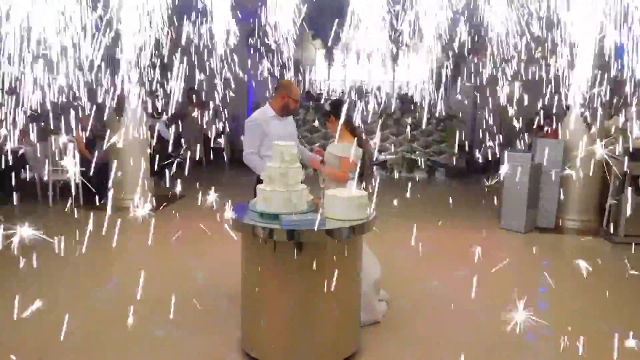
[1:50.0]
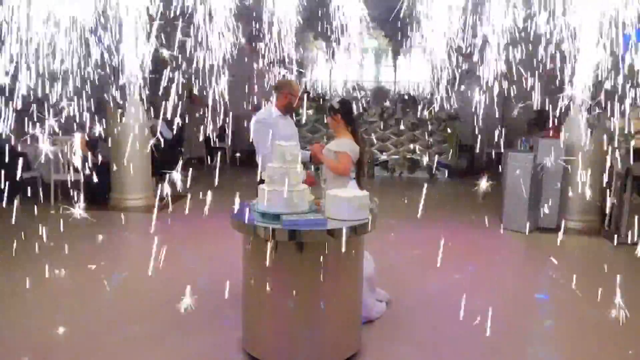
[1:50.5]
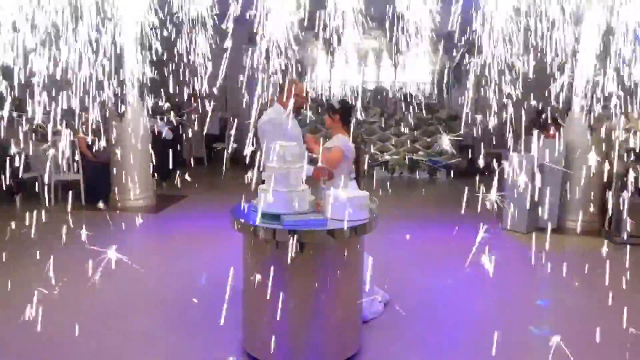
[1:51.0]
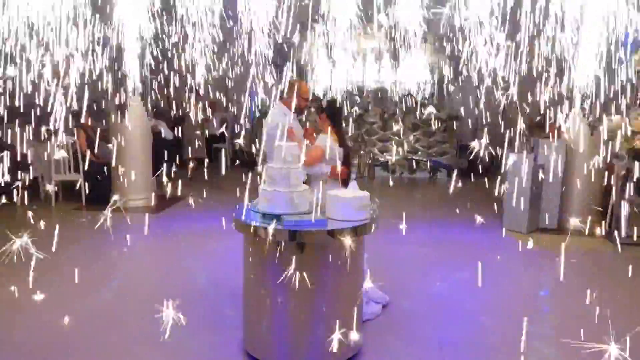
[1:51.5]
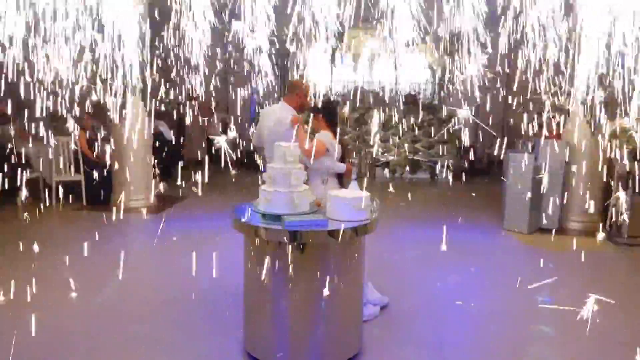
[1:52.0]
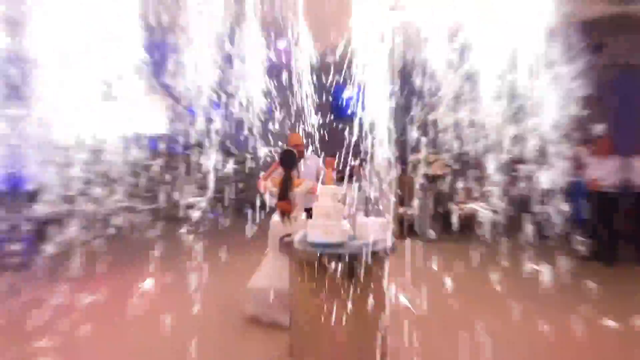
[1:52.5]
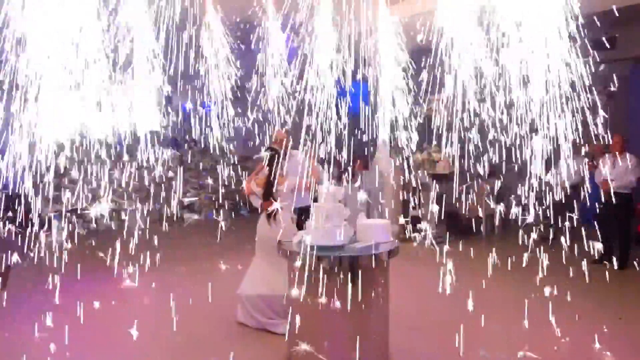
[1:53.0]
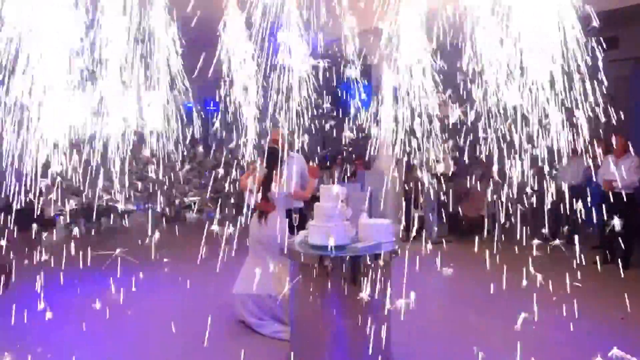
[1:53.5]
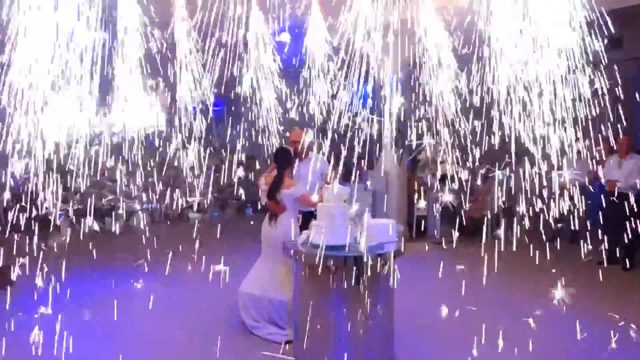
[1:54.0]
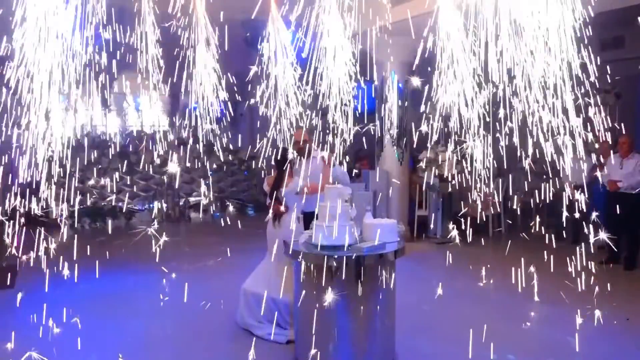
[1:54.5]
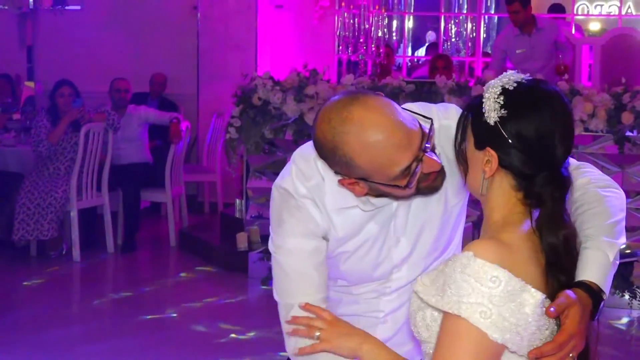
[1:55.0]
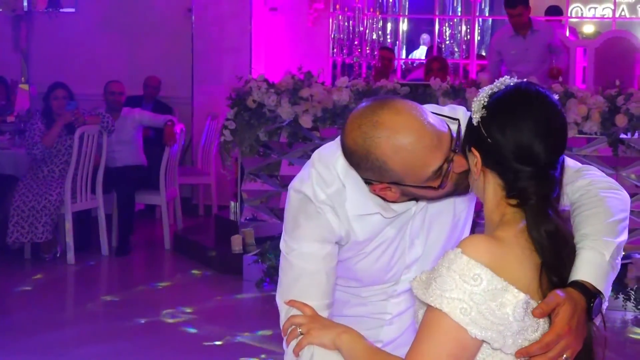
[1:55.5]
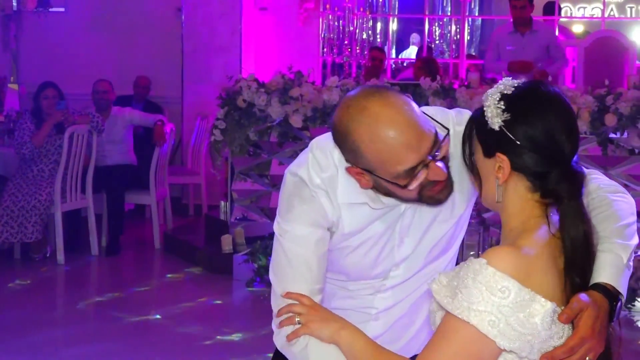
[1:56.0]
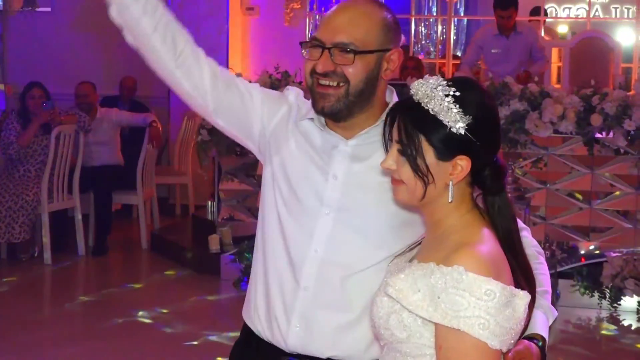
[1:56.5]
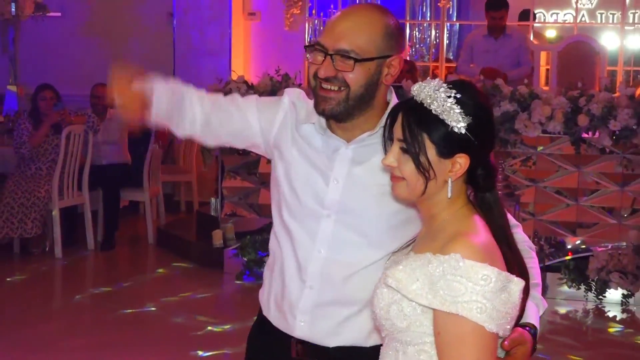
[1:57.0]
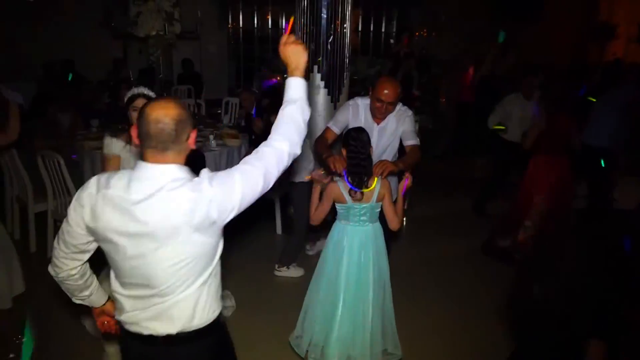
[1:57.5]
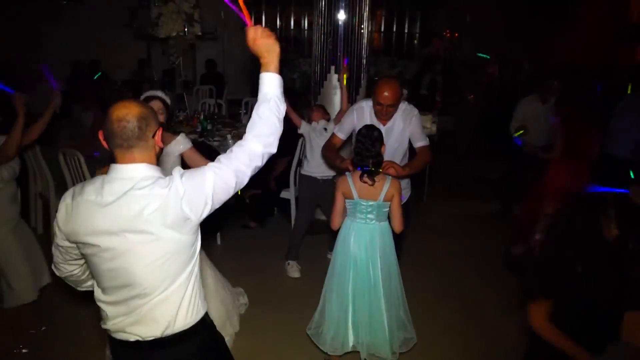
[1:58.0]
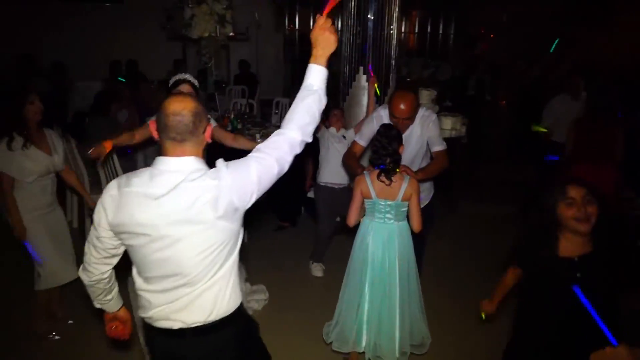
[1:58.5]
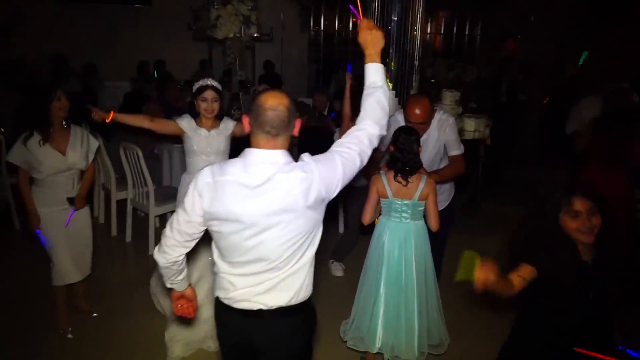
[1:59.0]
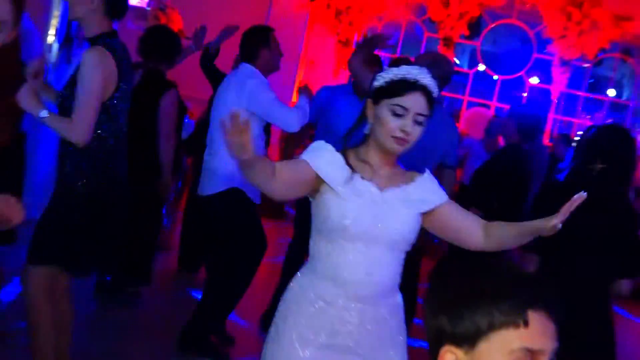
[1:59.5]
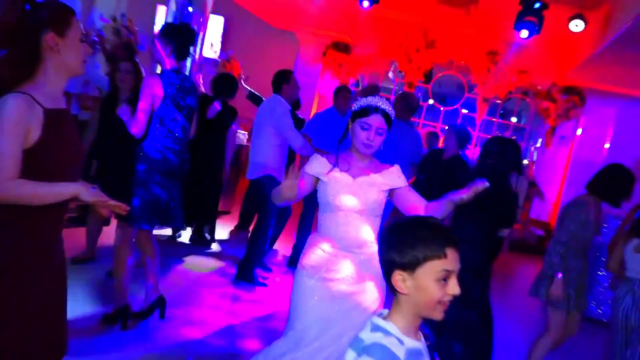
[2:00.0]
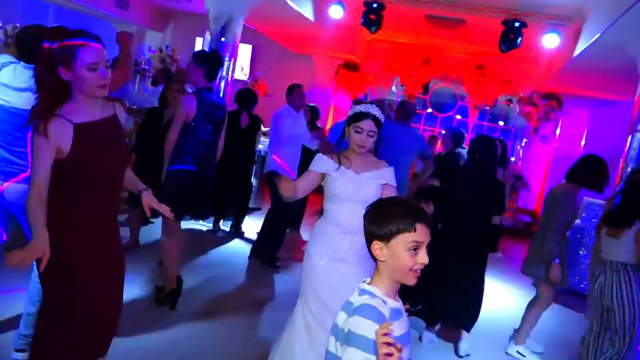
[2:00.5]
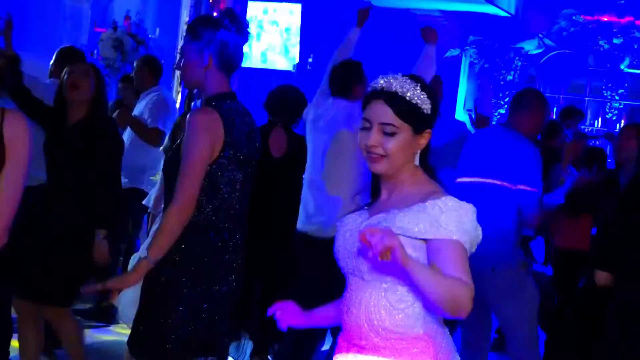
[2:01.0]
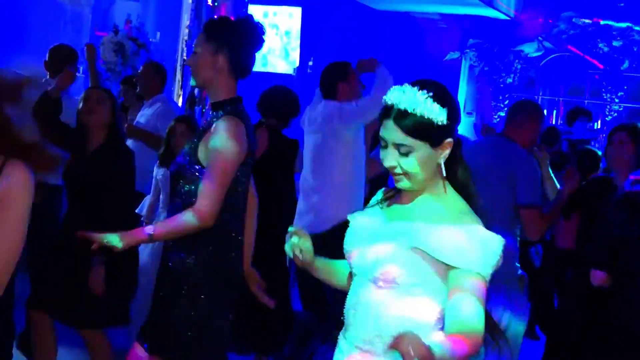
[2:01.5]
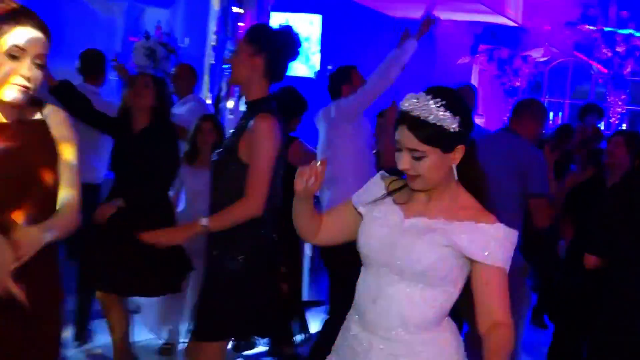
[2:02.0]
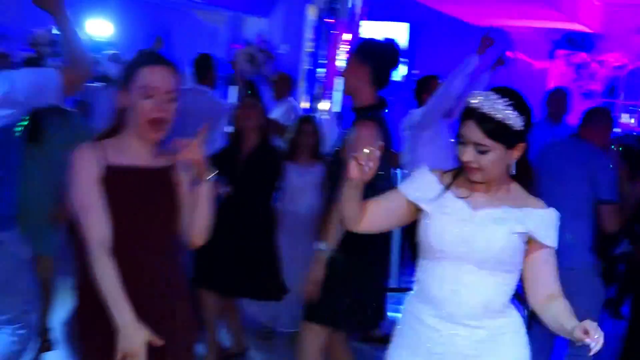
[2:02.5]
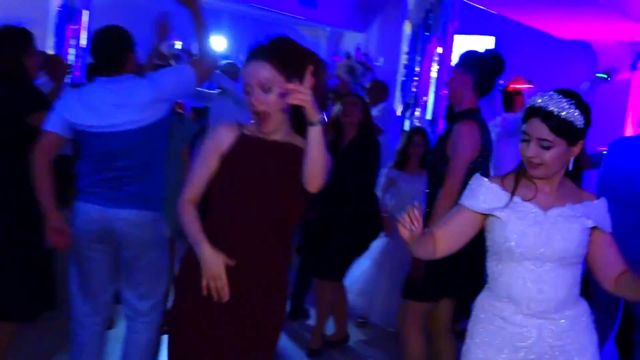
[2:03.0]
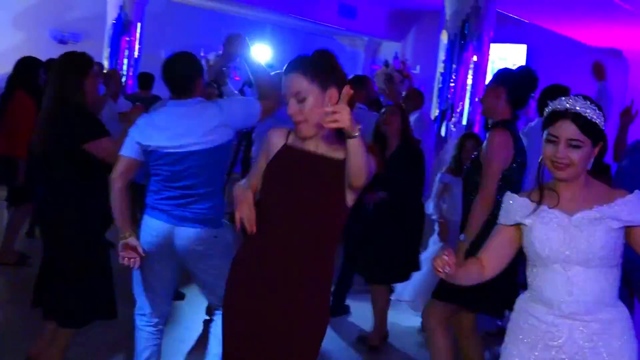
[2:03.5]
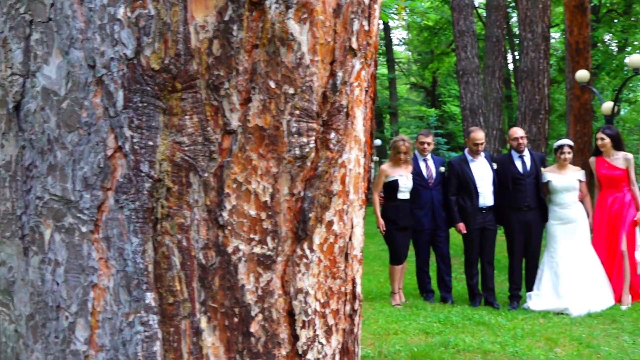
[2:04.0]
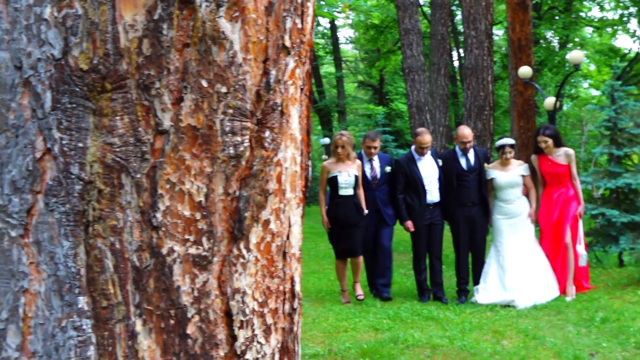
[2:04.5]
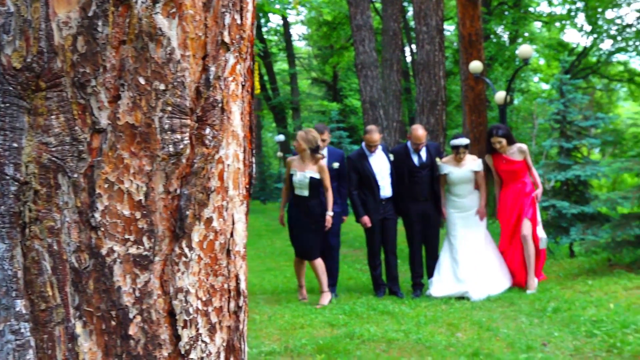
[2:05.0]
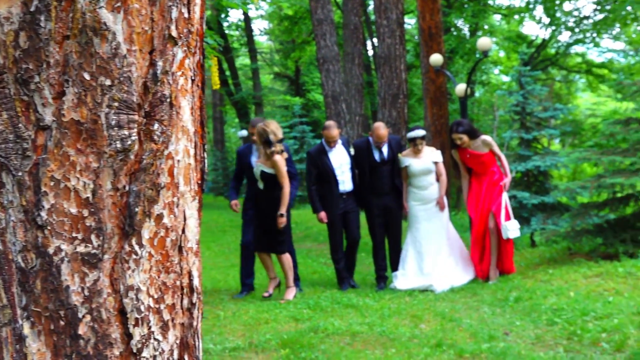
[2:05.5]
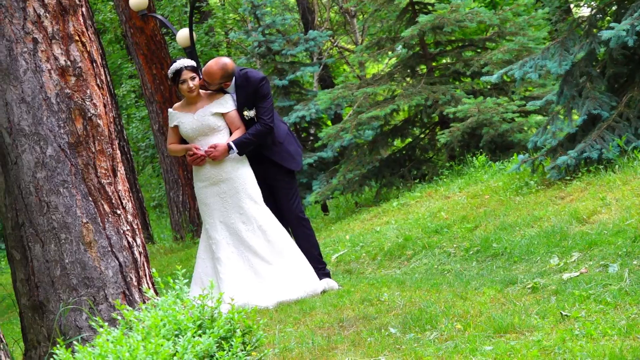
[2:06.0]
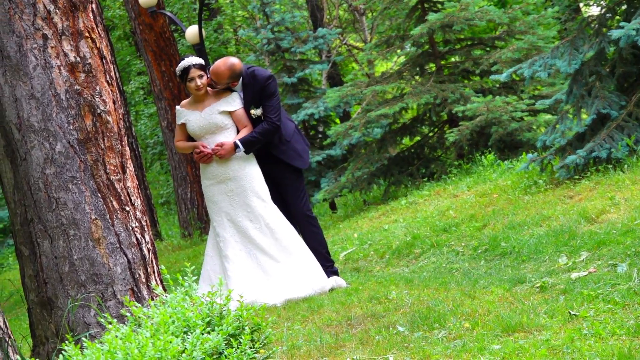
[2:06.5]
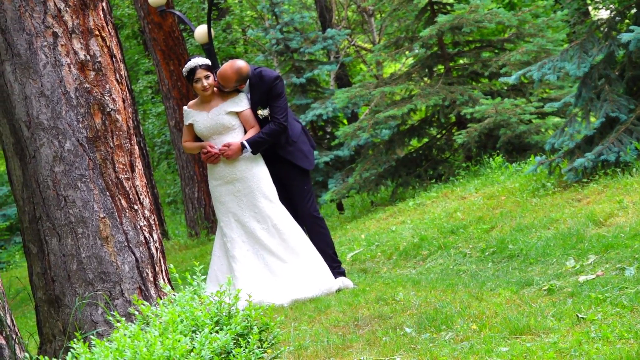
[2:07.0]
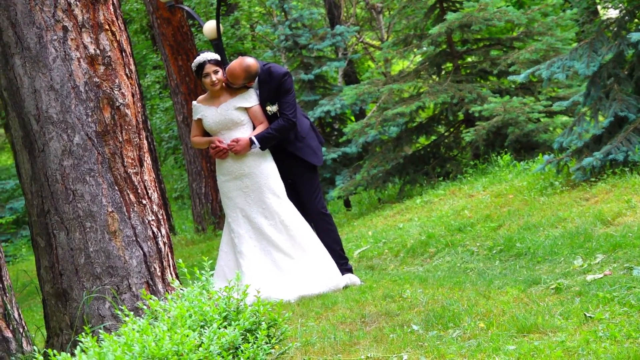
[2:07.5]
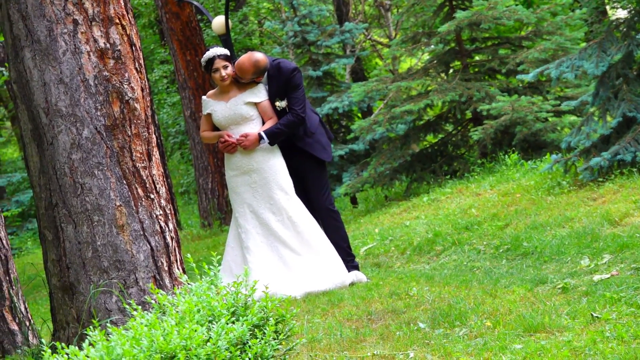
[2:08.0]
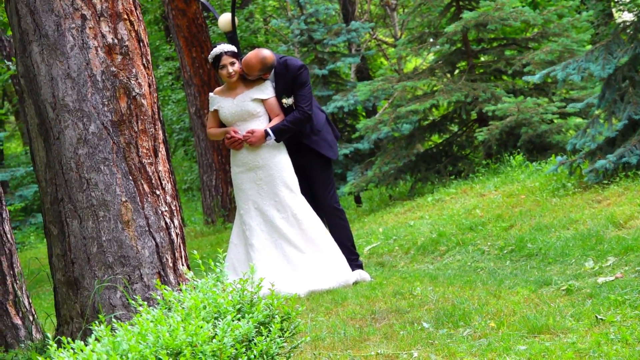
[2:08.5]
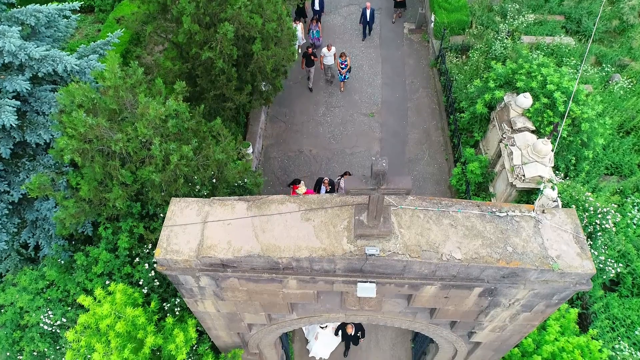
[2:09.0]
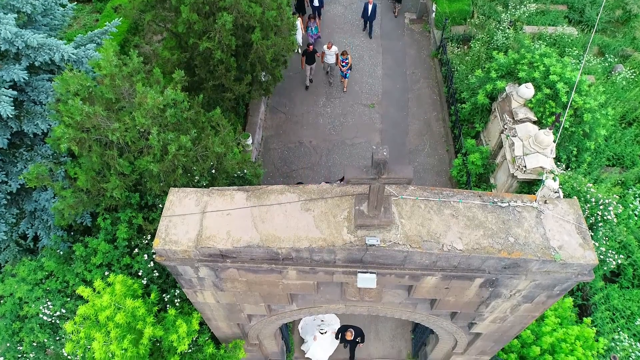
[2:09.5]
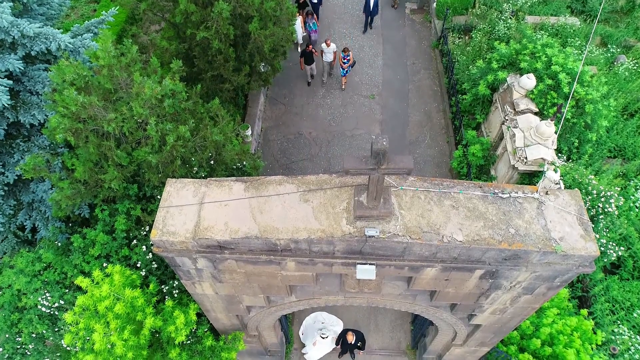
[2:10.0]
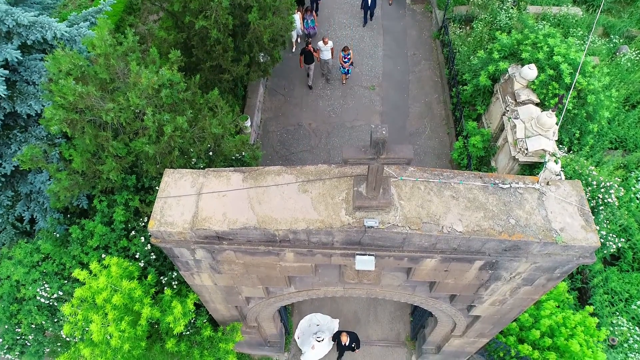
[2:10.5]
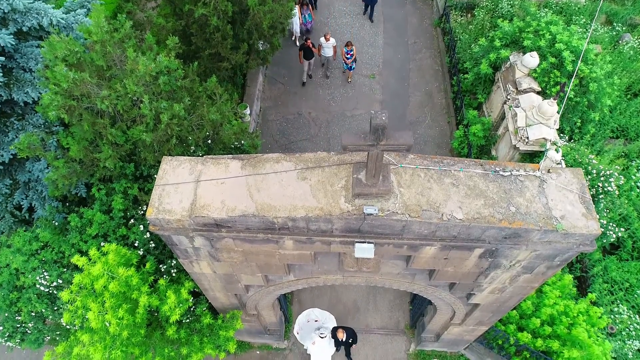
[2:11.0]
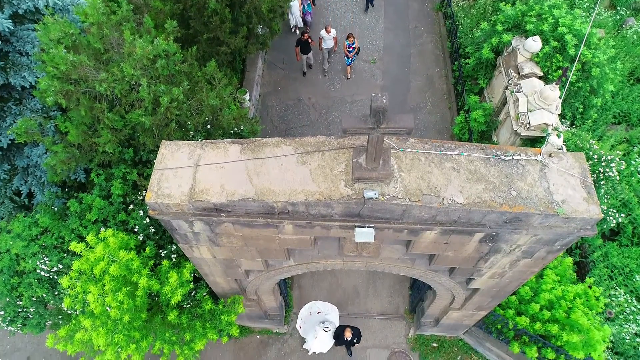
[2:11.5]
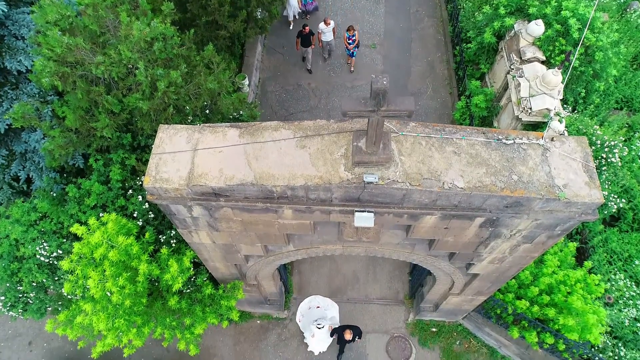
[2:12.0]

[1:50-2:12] There are a lot of lights as the lady and the man kiss each other and dance. Many people are dancing, and then they take pictures and pose. Finally, the couple leave the wedding venue.